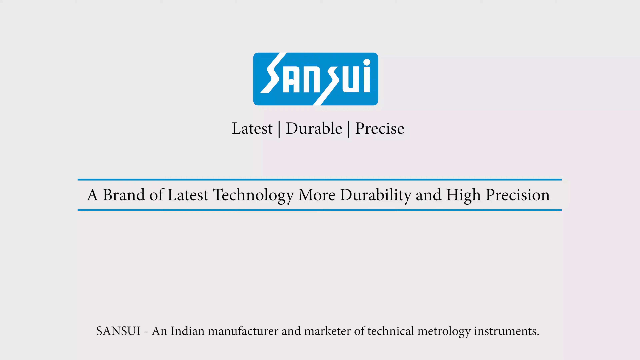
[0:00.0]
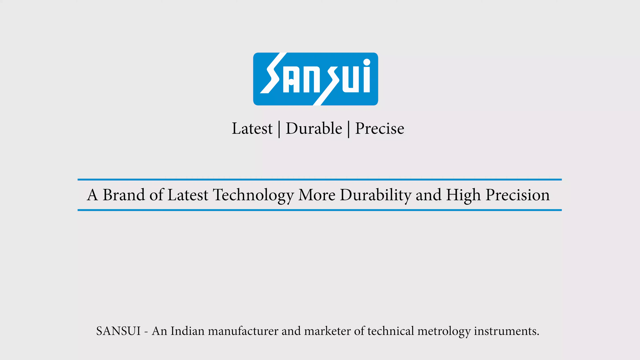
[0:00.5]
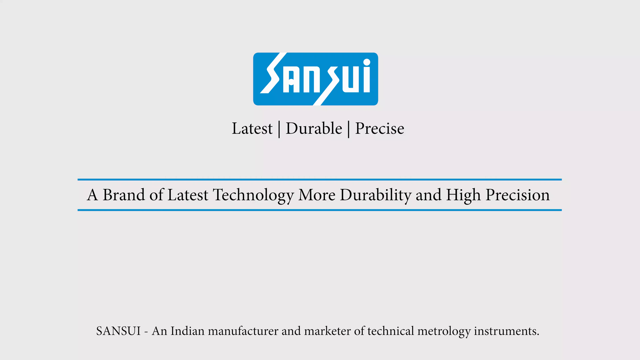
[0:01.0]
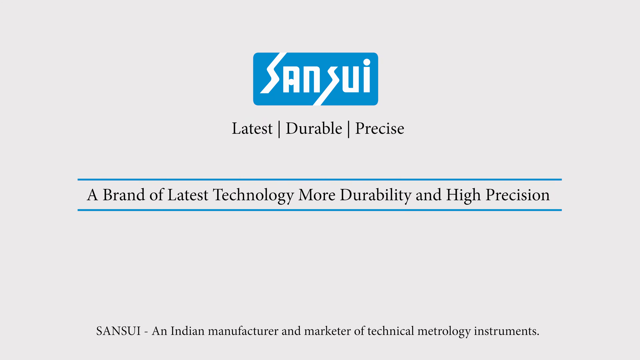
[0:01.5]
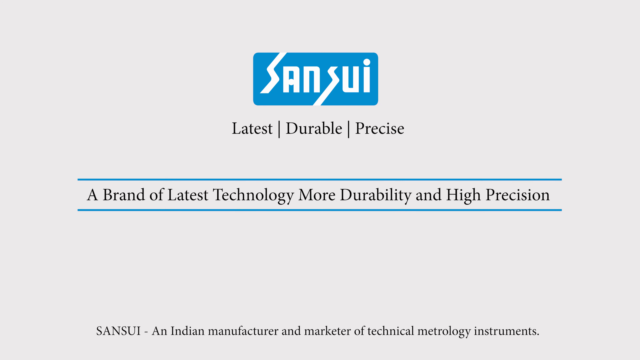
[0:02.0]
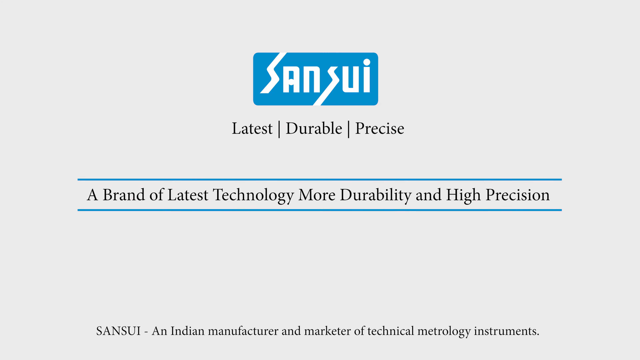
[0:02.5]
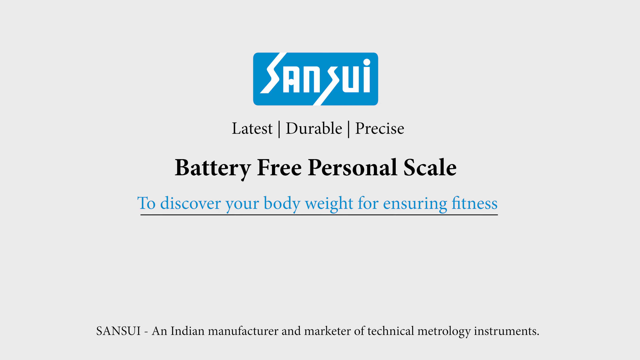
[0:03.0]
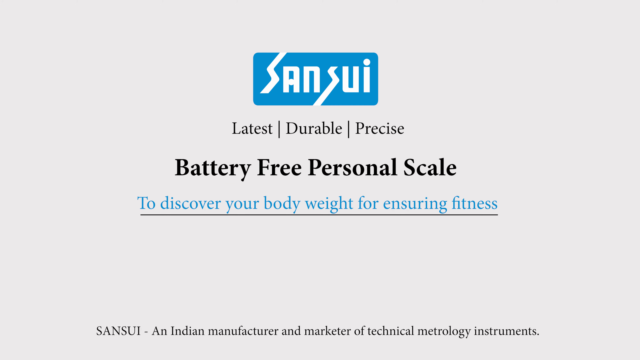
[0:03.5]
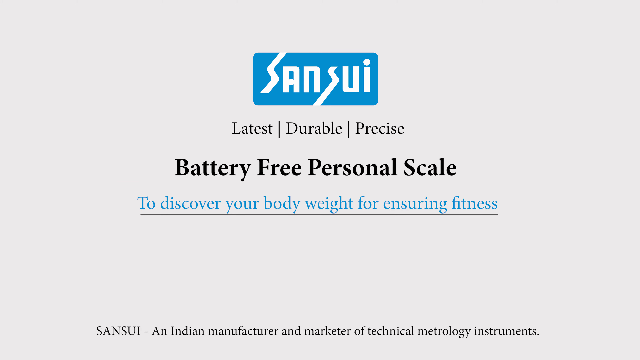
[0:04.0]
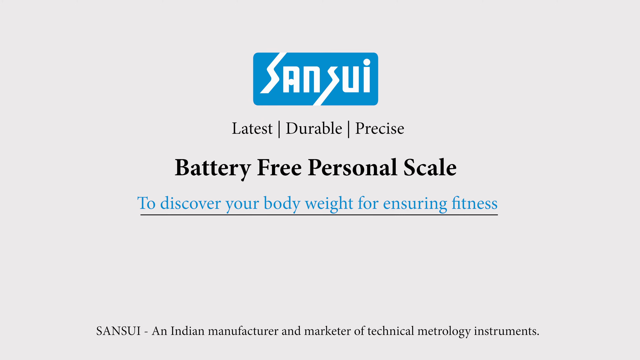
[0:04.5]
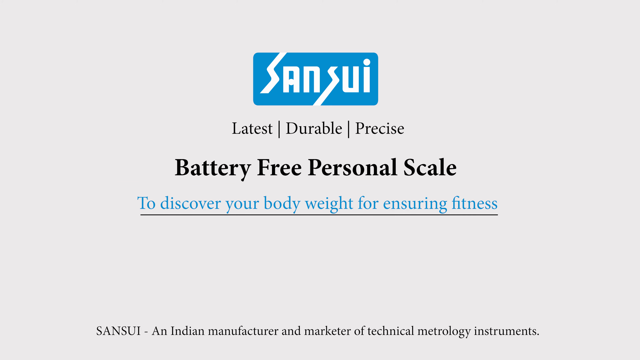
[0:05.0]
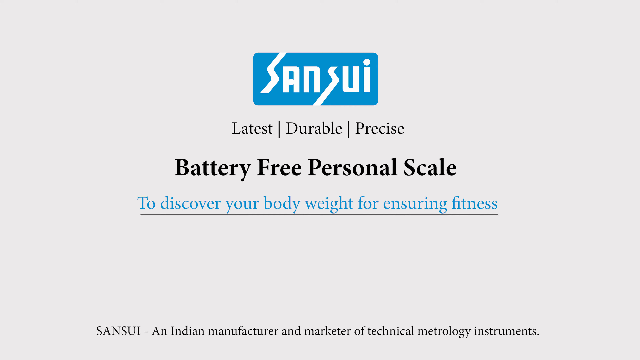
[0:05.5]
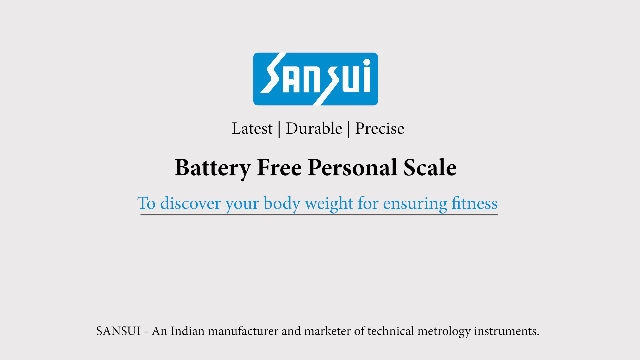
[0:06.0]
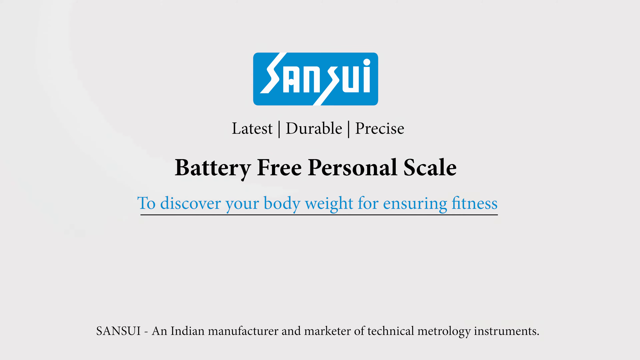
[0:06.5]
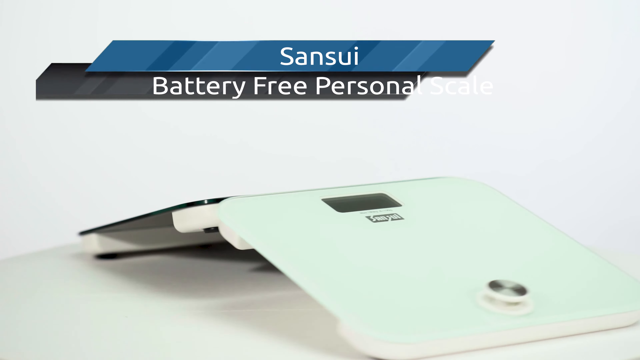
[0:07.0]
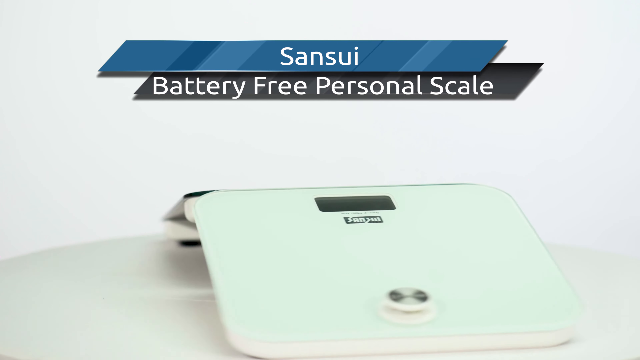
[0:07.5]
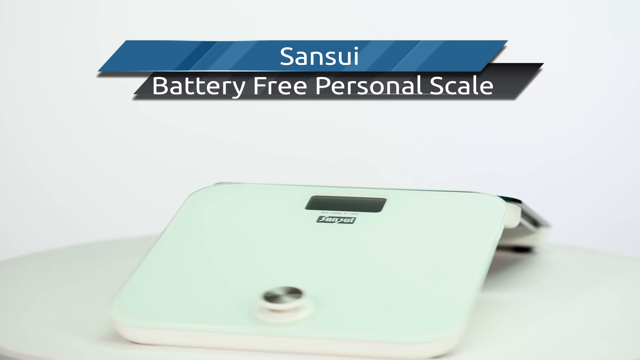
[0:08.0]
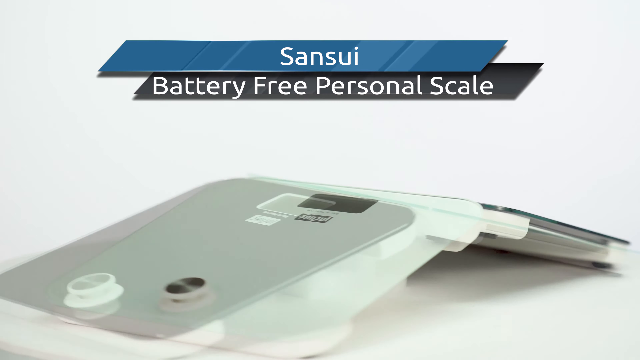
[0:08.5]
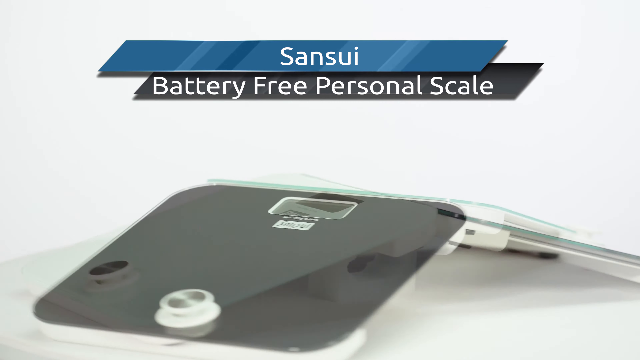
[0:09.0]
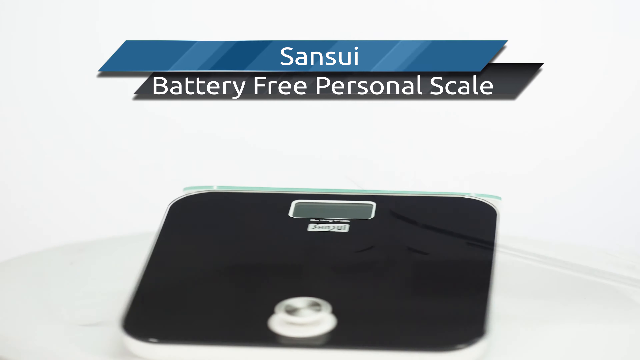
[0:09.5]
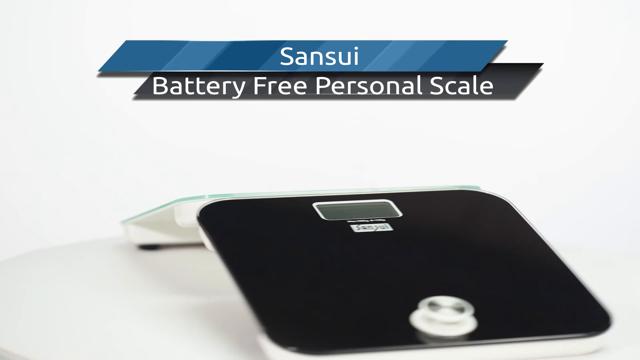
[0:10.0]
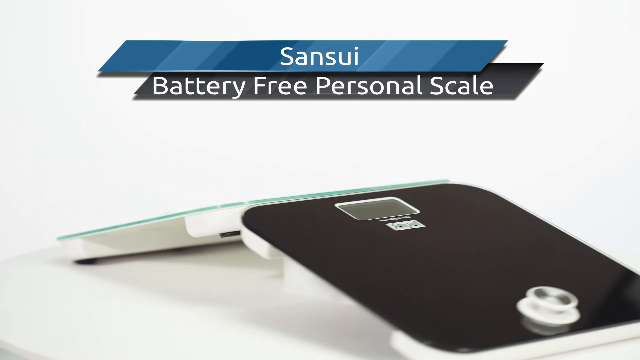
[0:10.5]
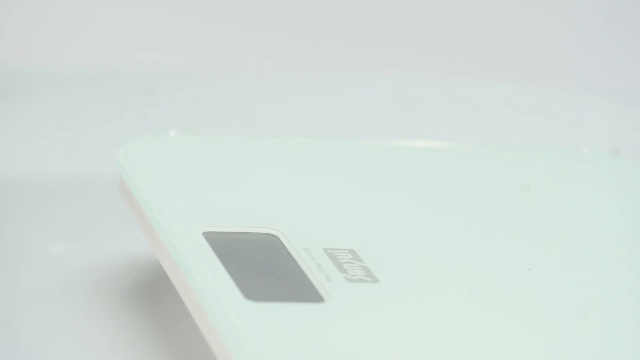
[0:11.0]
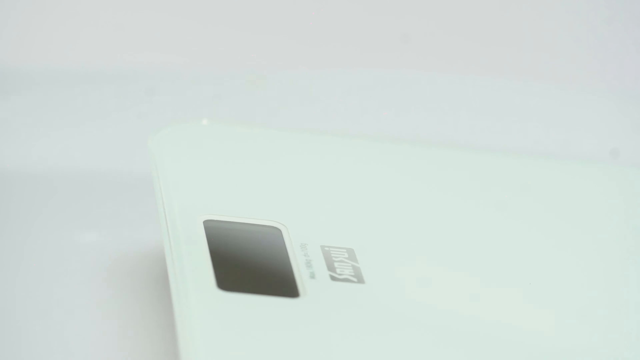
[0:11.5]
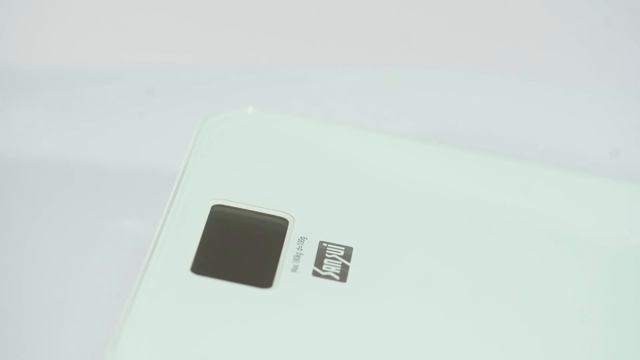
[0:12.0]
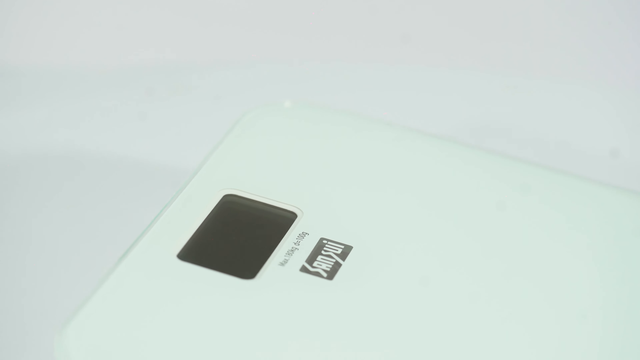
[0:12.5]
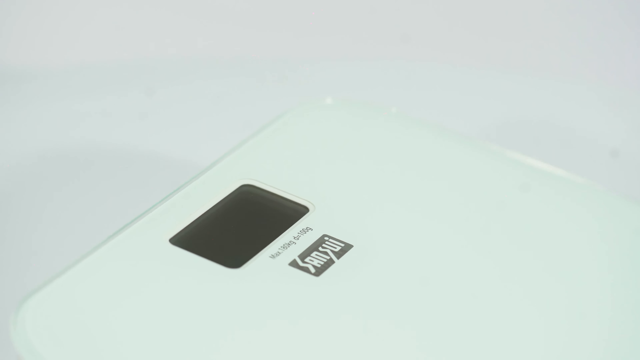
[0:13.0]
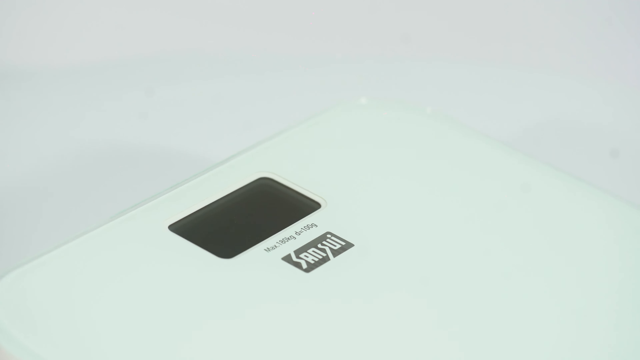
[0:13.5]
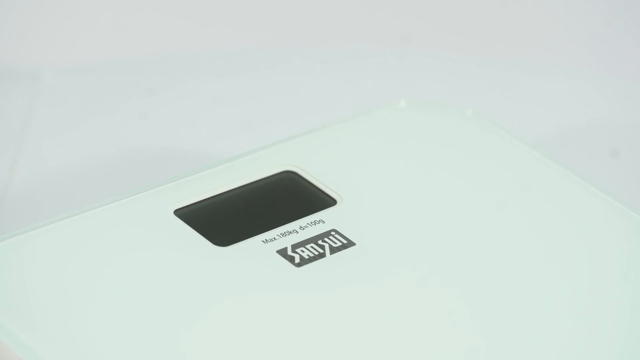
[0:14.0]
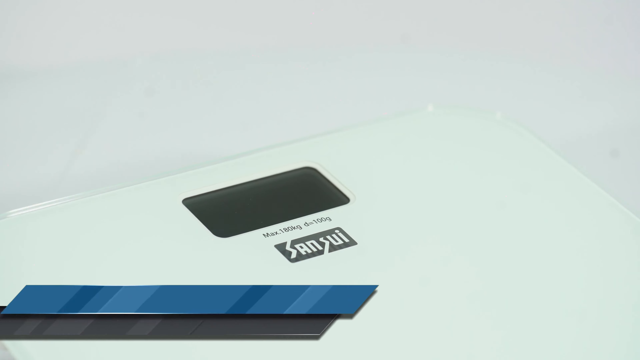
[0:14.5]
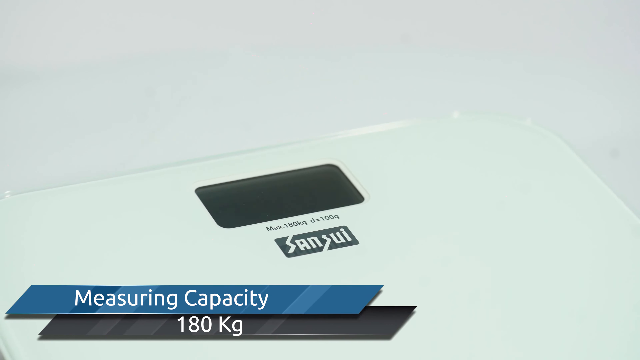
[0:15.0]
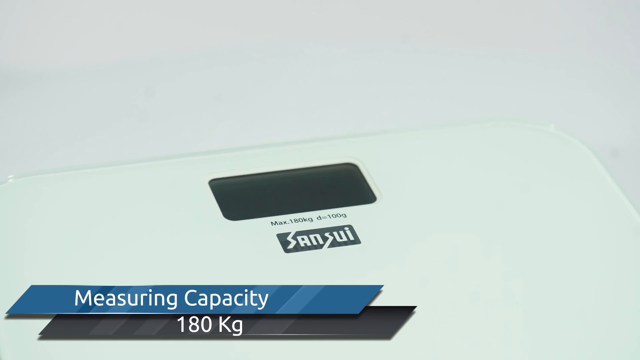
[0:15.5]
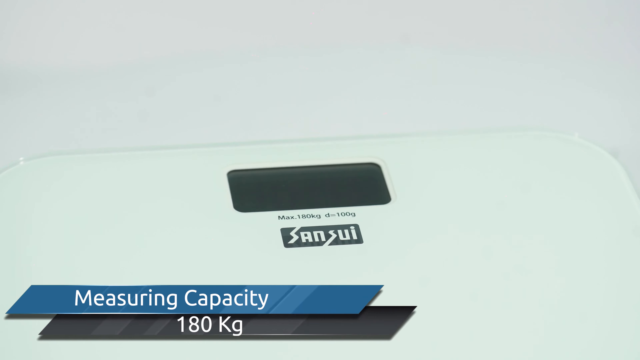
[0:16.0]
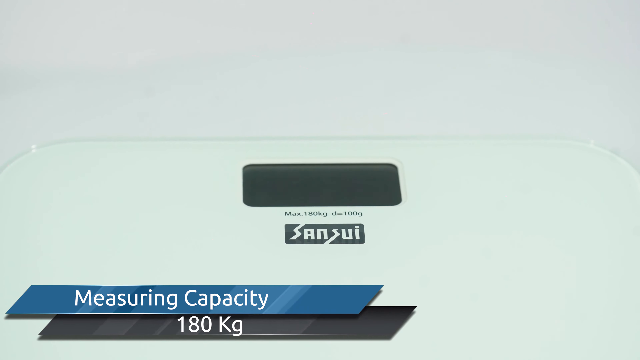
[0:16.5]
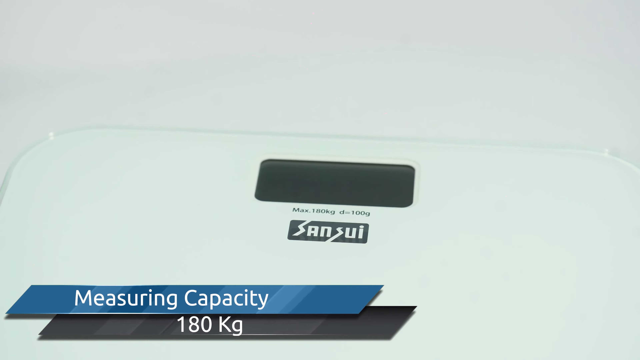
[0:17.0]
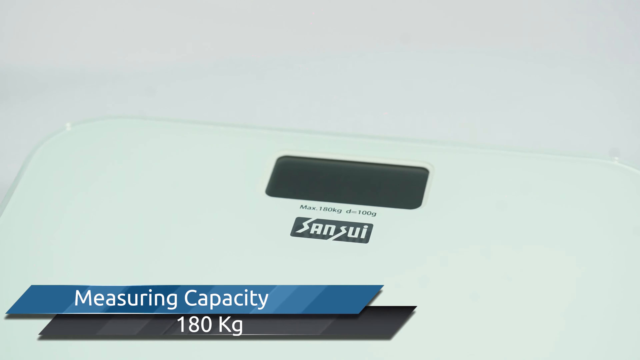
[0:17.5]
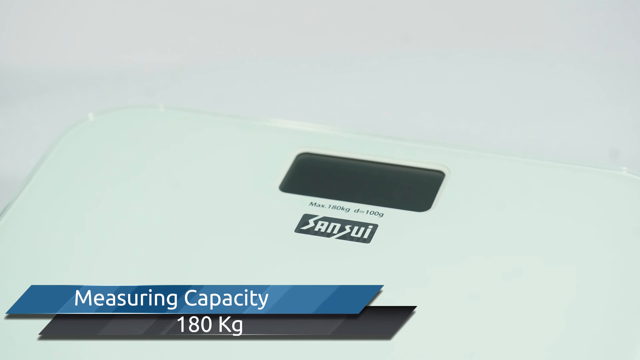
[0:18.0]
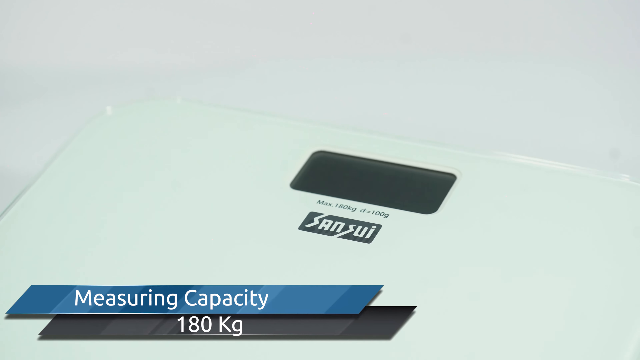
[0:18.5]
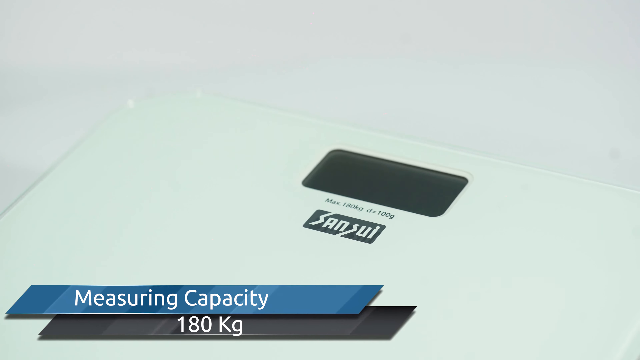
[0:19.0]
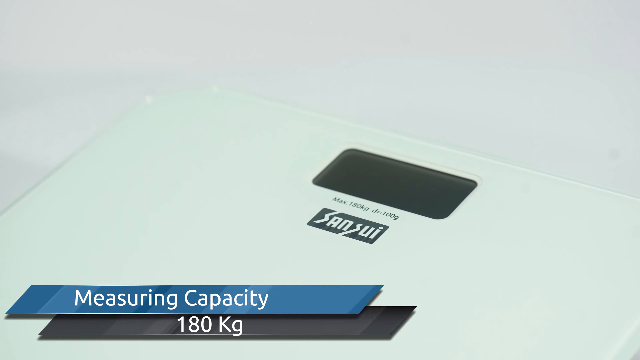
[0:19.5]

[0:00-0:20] The word "Sansui" appears on the screen, spelt S-A-N-S-U-I, as a logo at the top in white writing on a blue background in a rectangular box. Underneath are the words "latest, durable, precise", and under these, in black, the words "battery-free personal scale". Below this, in light blue, are the words "to discover your body weight for ensuring fitness", with a black line underneath them. The video then shows the scales, which are panned around so they can be seen clearly. The words "Measuring Capacity 180kg" are clearly shown on the screen. The scales are slim, white on one side and black on the other. The words "Battery Free Personal Scale" and "A brand of latest technology more durabilty and high precision" are shown. Another image of the scales appears, with words at the bottom stating that they are manufactured in India.